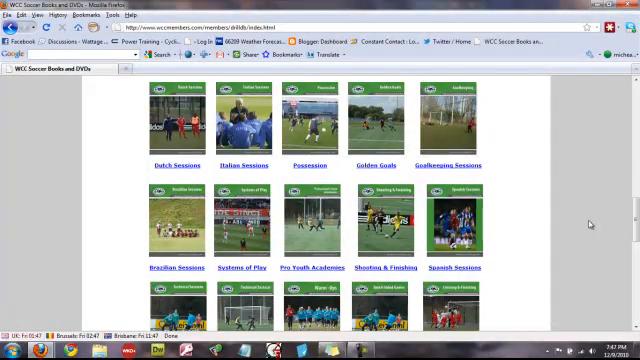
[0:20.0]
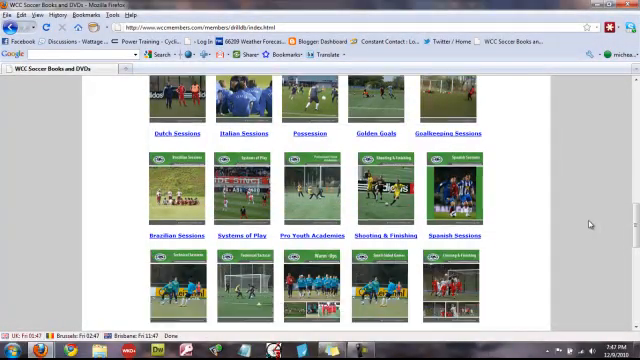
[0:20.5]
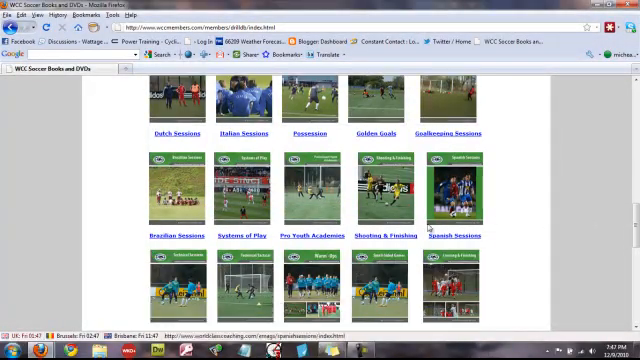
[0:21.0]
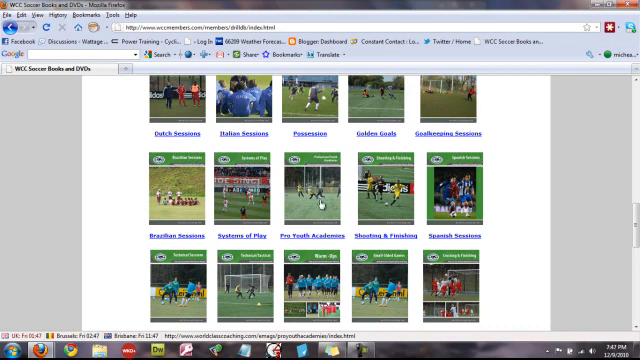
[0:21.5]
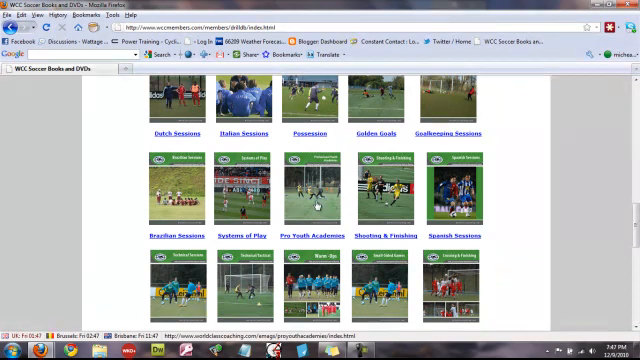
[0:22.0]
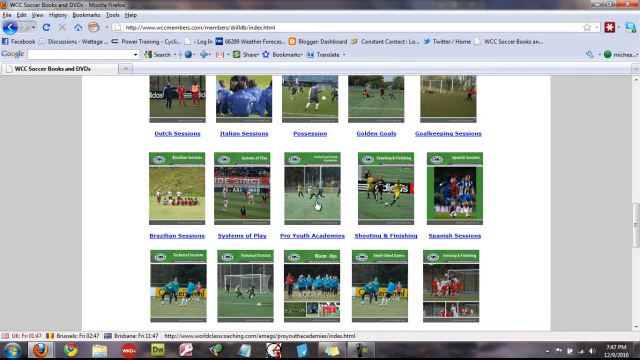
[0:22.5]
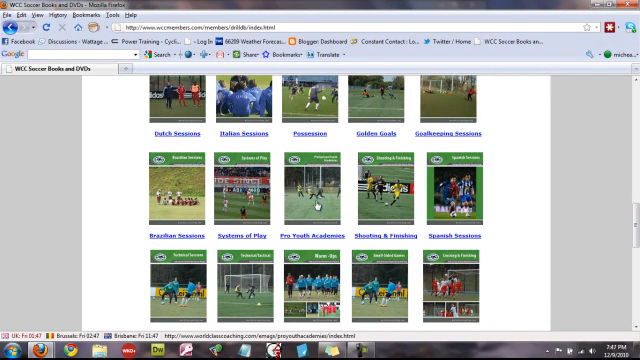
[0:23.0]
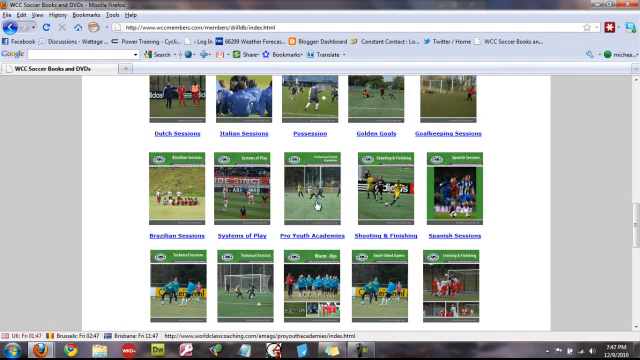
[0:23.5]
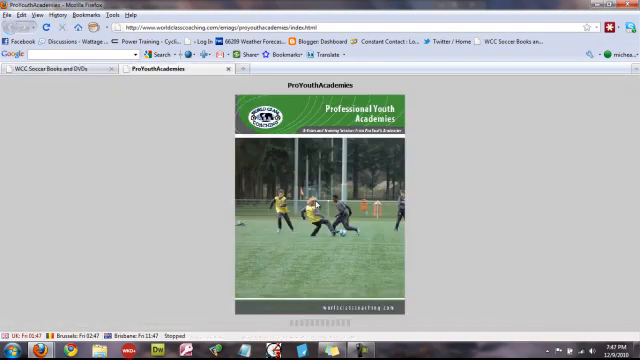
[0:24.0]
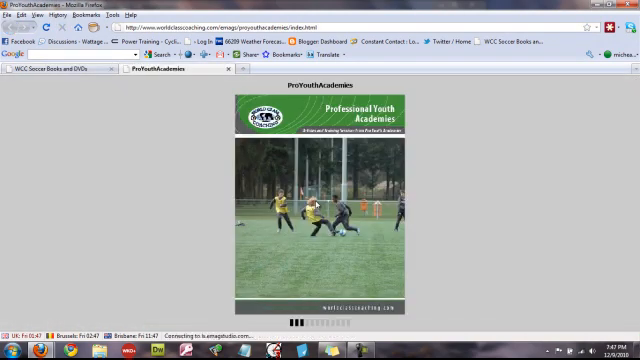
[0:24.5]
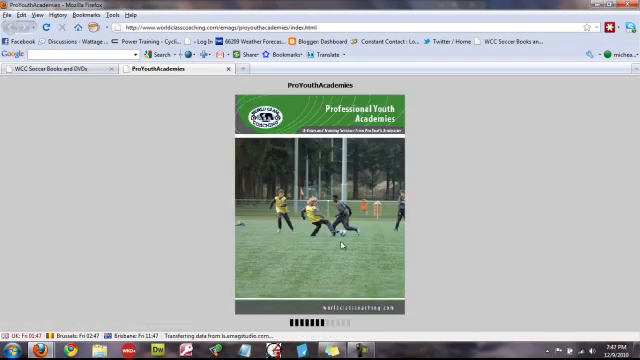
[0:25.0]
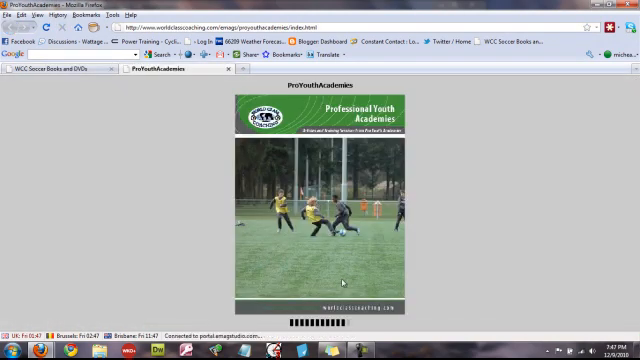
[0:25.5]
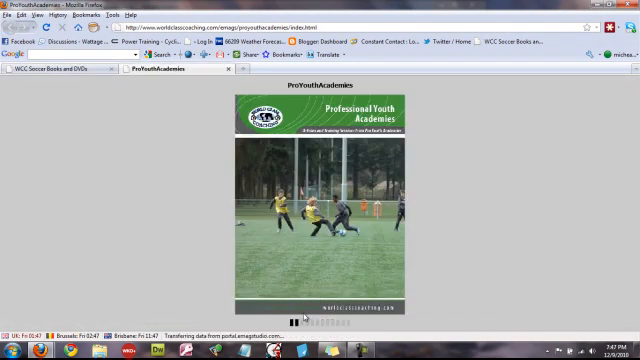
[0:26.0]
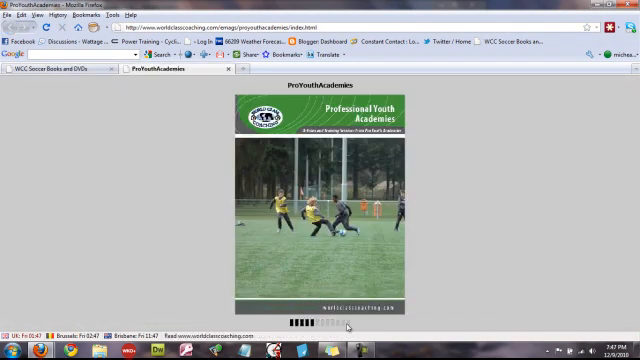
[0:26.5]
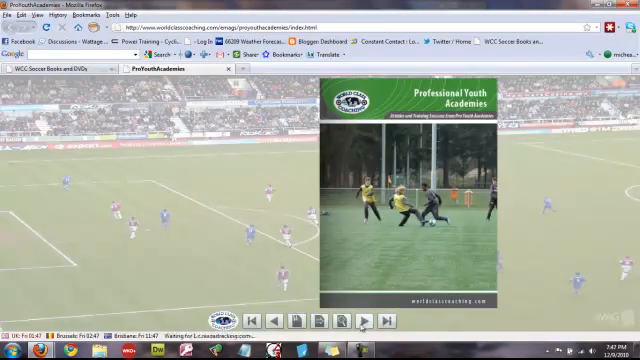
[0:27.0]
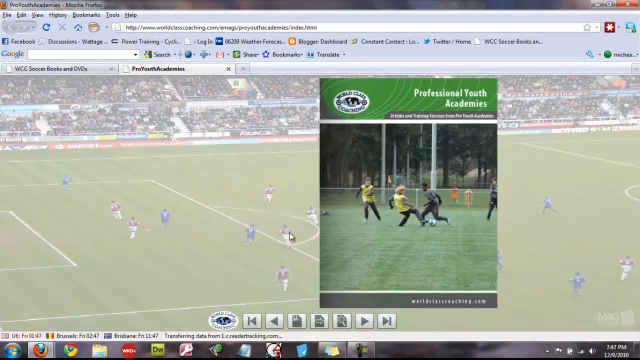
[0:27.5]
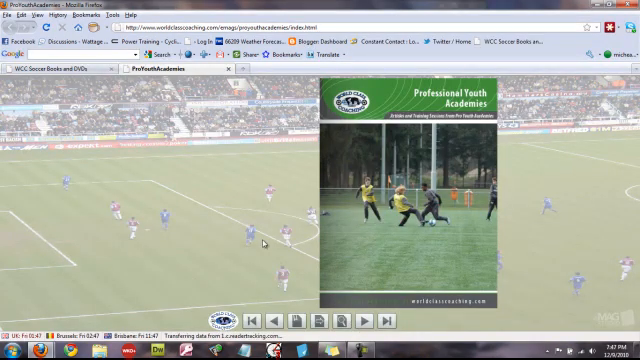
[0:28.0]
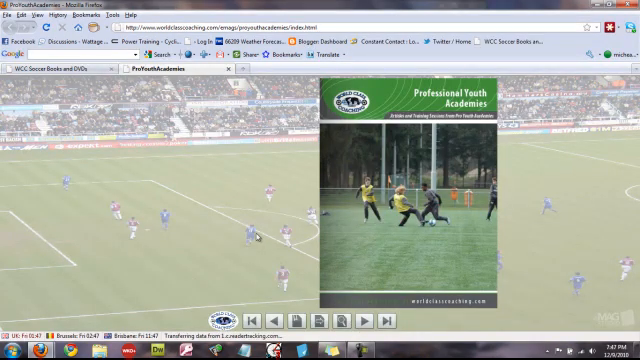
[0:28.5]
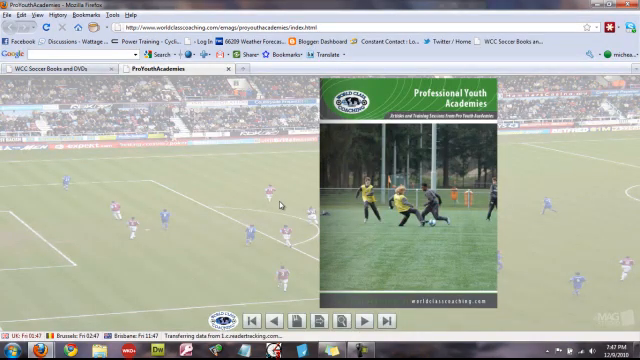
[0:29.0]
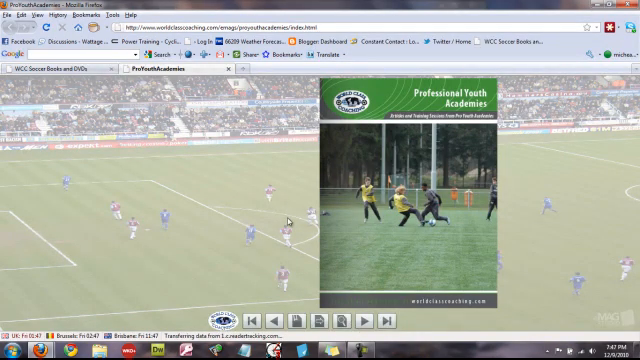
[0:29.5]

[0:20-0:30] The webpage shows several DVDs, with what appear to be titles or genres underneath each one, such as "Dutch Sessions", "Italian Sessions", "Possessions" and "Golden Goals". On the right side of the screen is the white arrow of the mouse cursor, and the scroll bar is scrolling down. The DVDs are lined up in rows of five. The arrow goes over to the center DVD, below which "Pro Youth Academics" is written in blue letters. The arrow changes to a finger pointing up with the thumb pointing out to the left. It clicks, and the DVD enlarges, showing some people playing soccer. The view then switches to a field in the background, and the arrow moves over some of the players in the background.